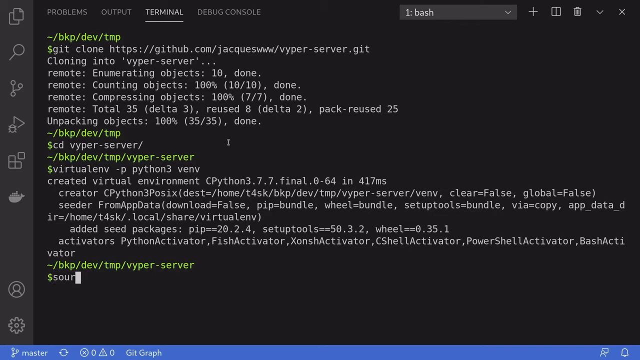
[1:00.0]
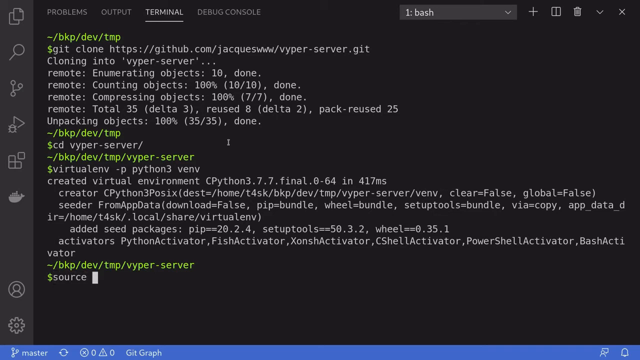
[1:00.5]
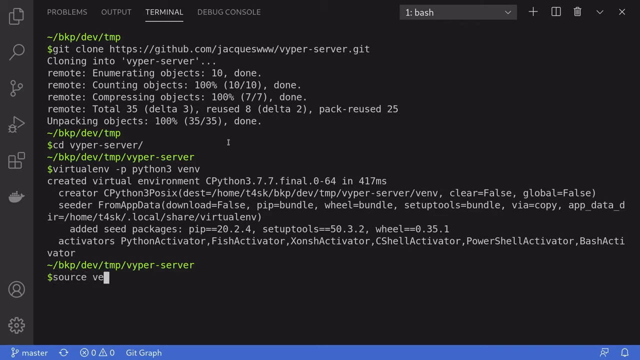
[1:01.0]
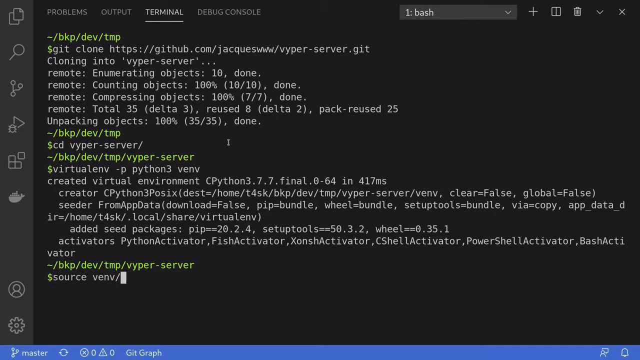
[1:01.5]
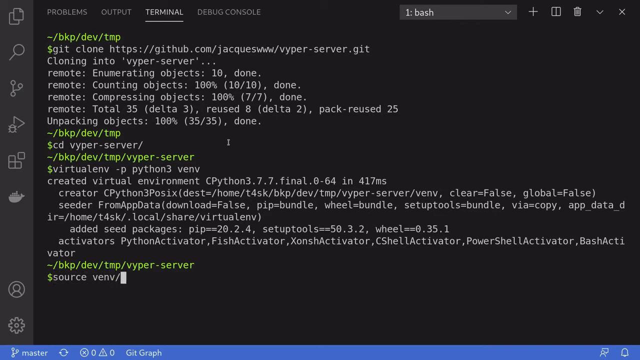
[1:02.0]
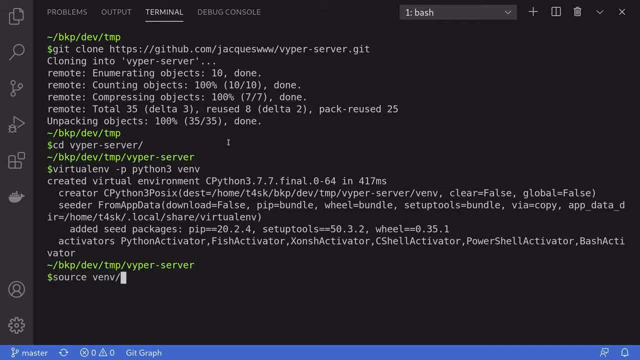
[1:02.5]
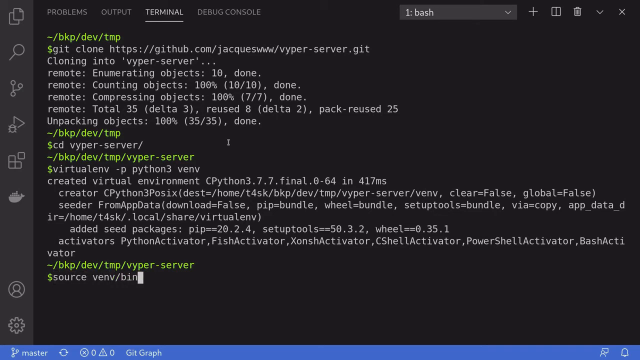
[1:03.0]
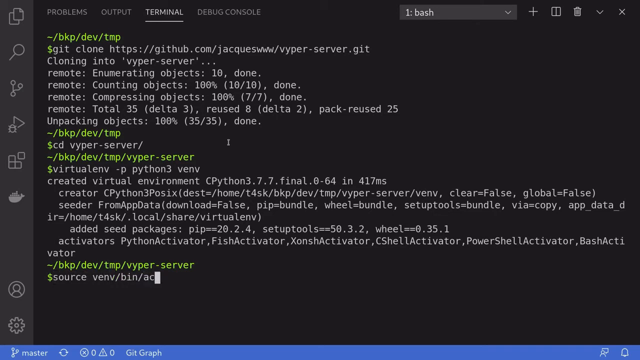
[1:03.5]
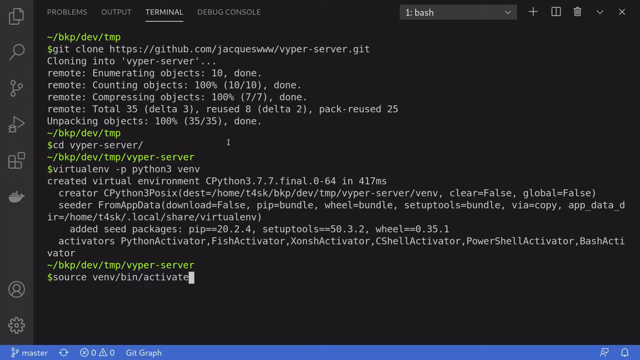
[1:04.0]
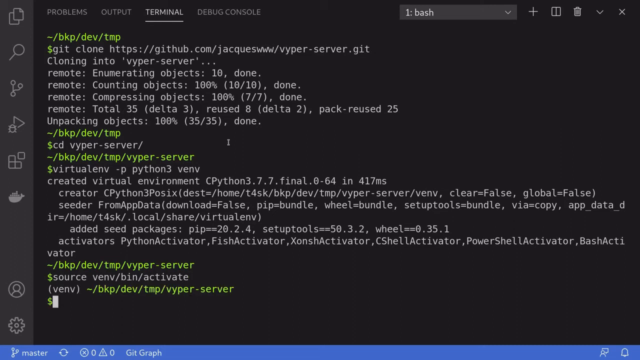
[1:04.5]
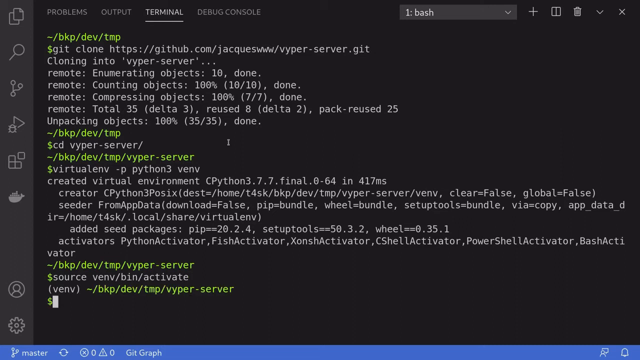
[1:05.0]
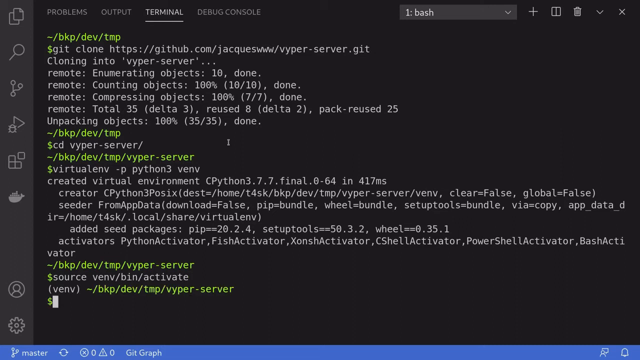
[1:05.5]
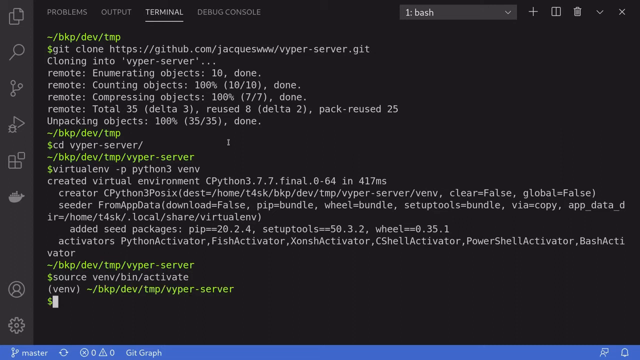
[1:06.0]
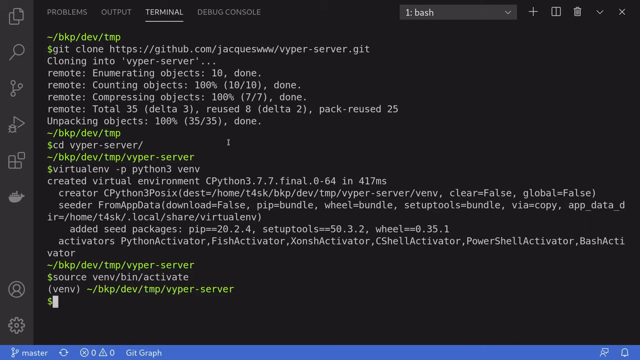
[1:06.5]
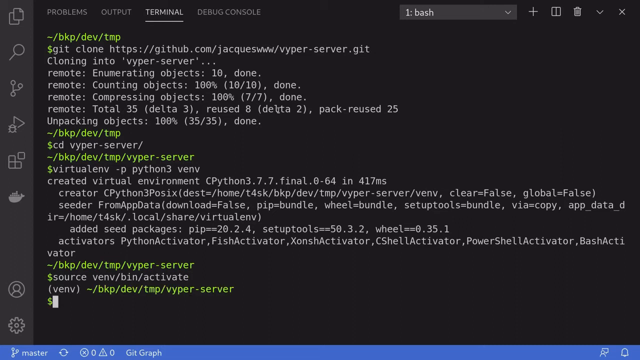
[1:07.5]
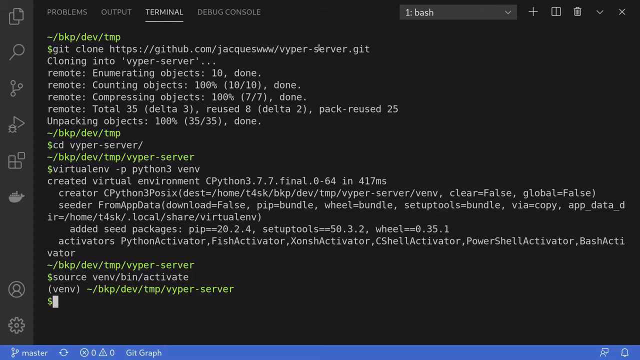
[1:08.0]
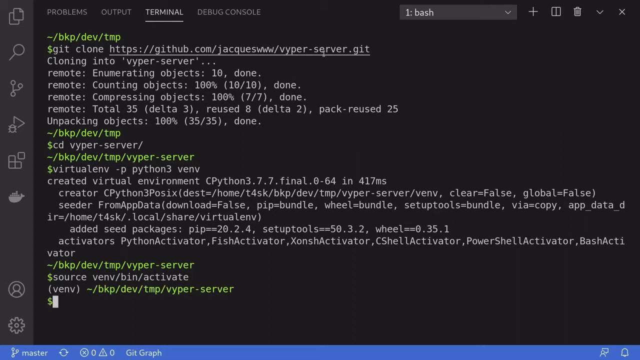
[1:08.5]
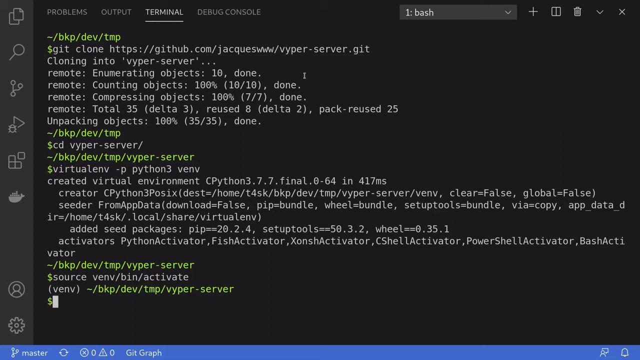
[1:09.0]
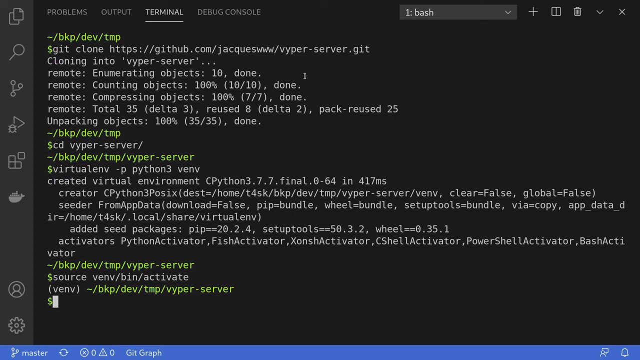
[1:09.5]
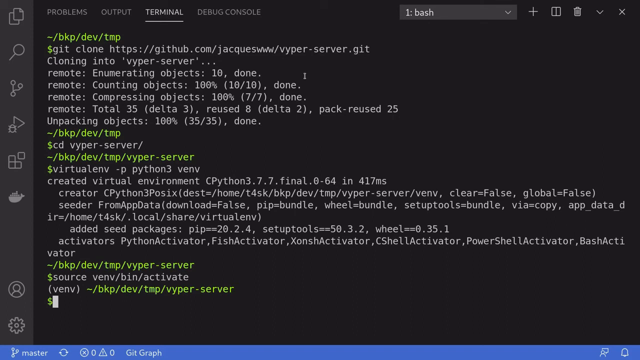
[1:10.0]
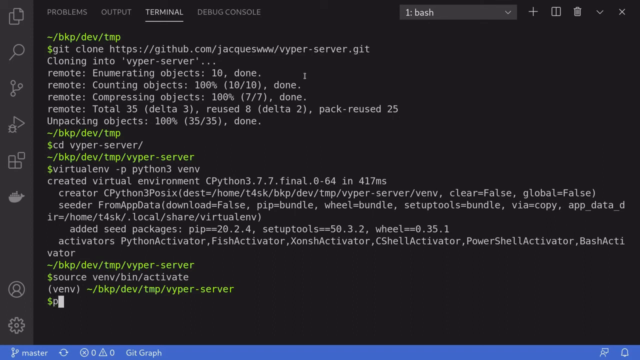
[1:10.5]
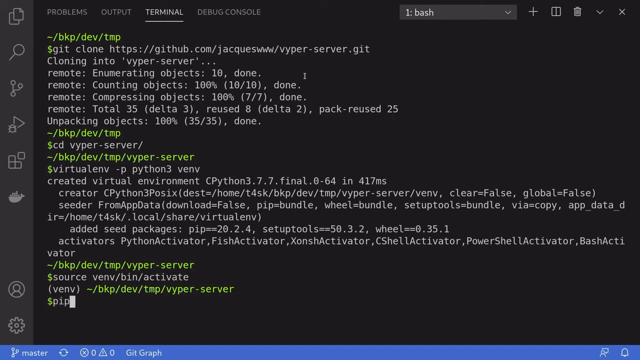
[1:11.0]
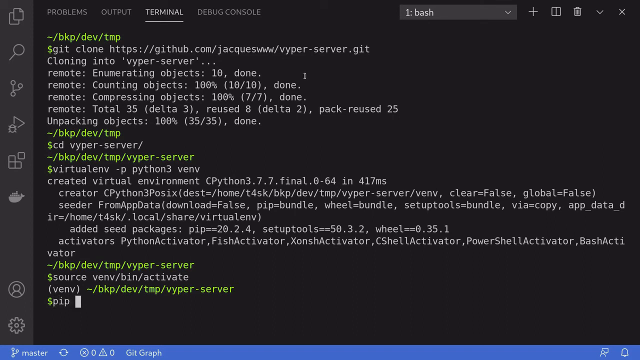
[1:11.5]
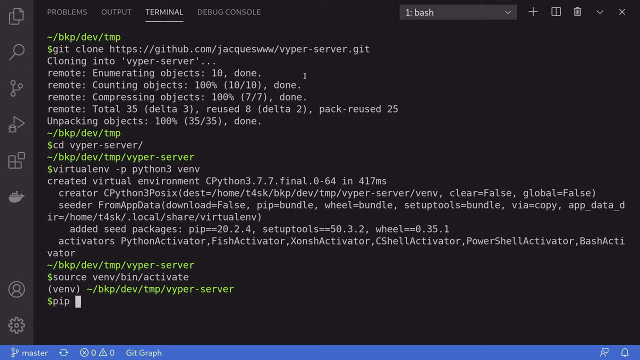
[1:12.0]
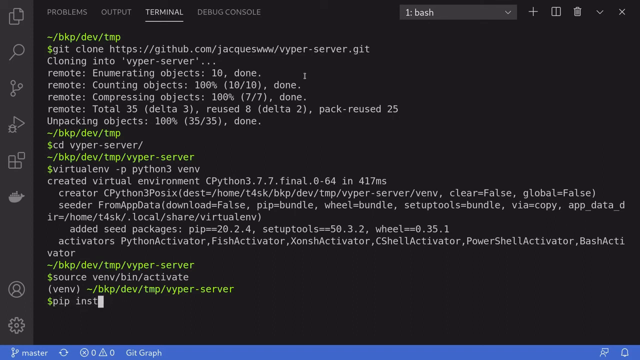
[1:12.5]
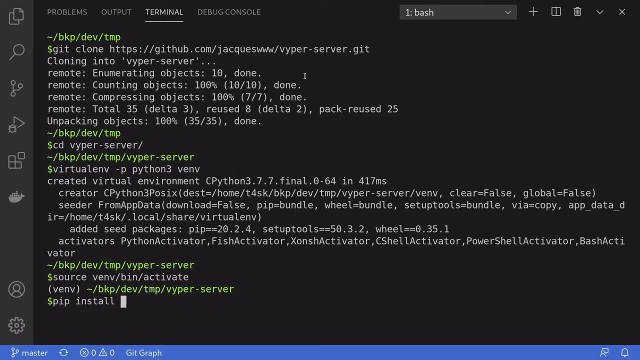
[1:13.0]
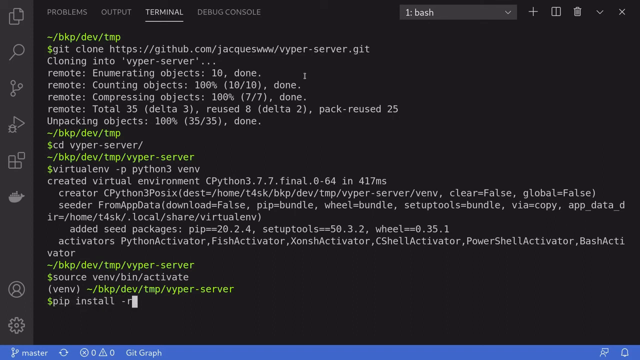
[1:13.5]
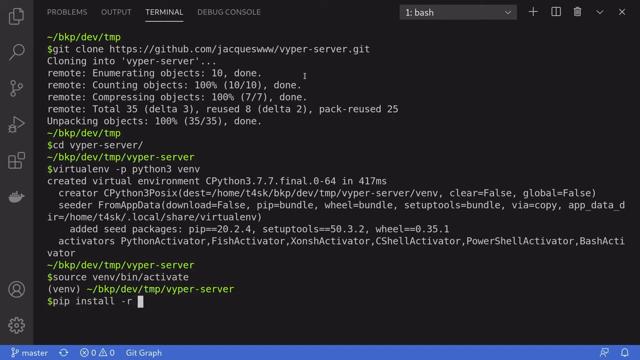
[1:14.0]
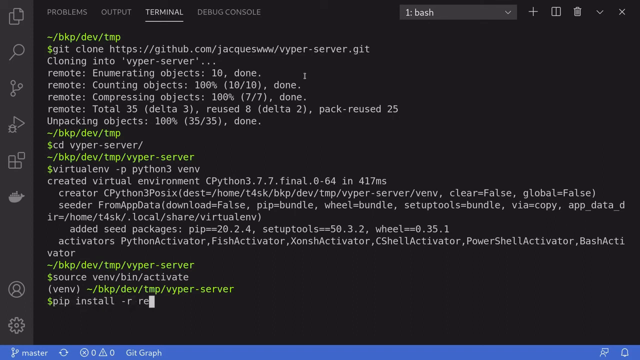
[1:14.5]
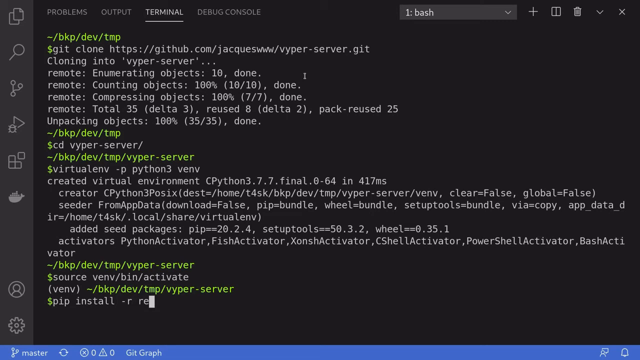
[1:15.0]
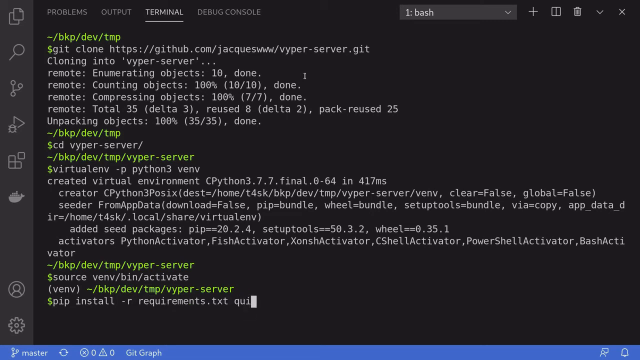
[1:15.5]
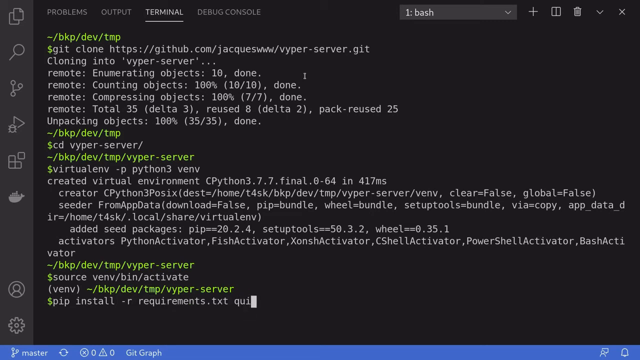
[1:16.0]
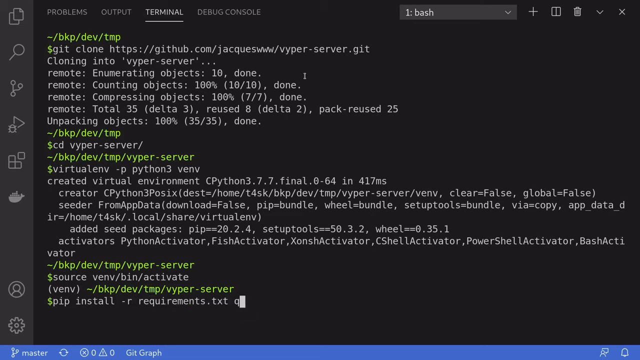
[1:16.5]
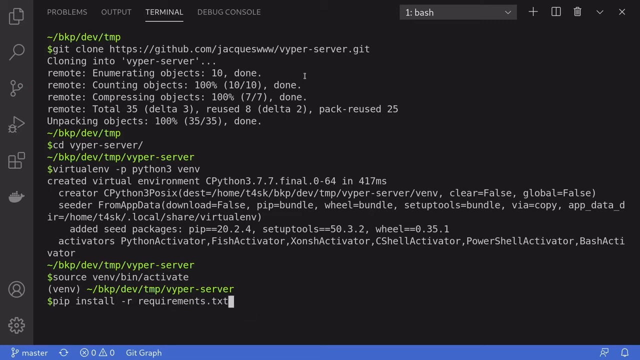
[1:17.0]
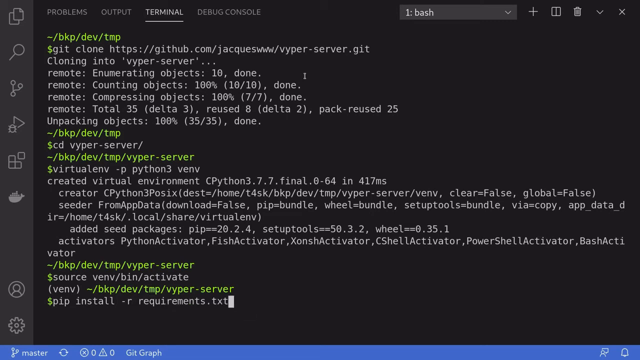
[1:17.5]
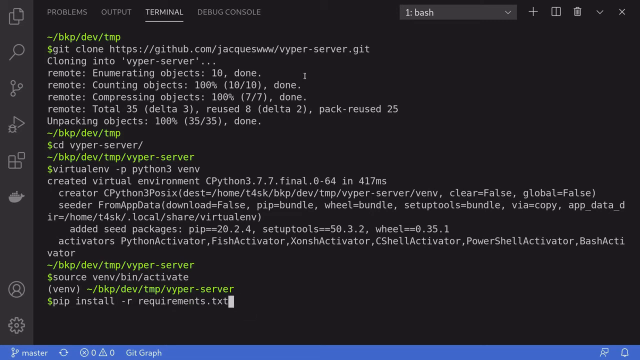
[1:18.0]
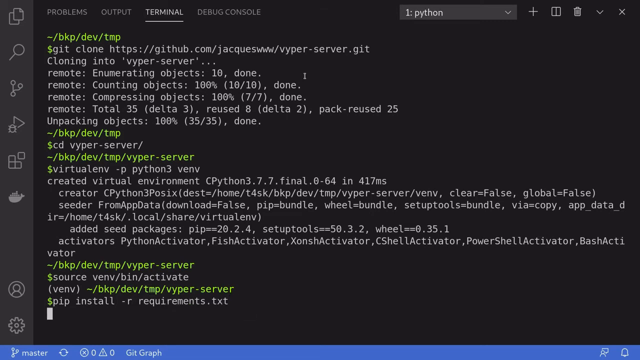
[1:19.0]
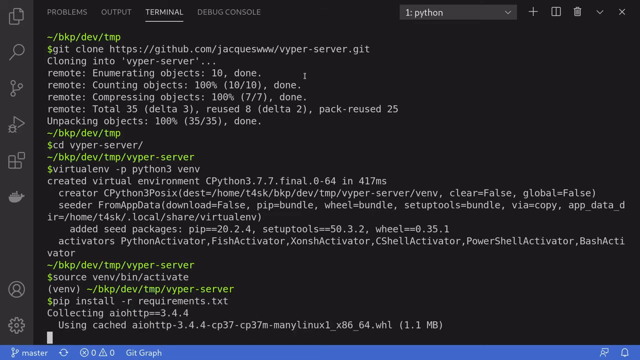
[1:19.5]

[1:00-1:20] The process moves on to the local compiler because the remote compiler is out of order. A Python package is needed on the system. To get it, "virtual-p python3" is typed, which gives the codes, the Python language and the Python package. The package is then installed by typing "pip install -r requirements.txt", installing the Python package on the system for use with the local compiler.